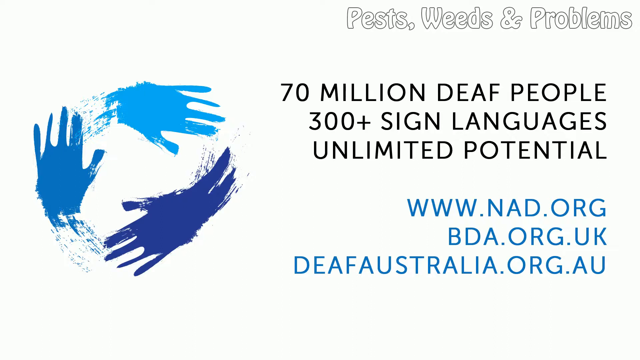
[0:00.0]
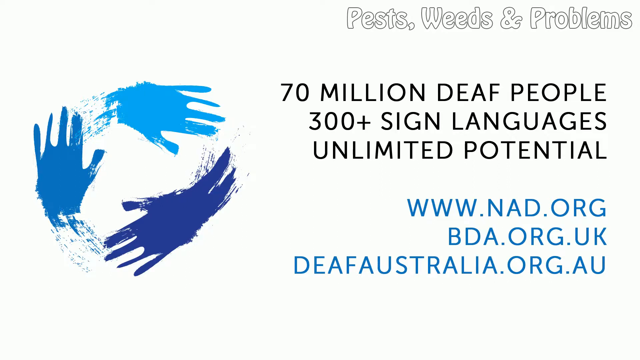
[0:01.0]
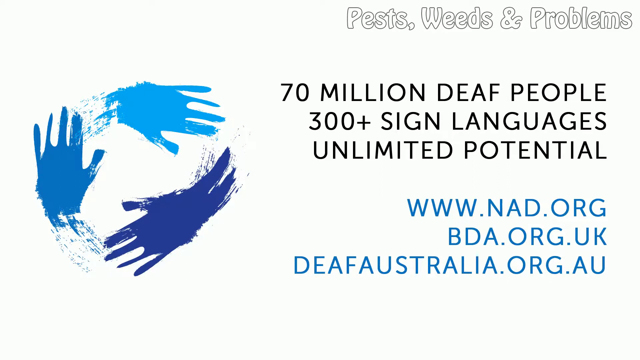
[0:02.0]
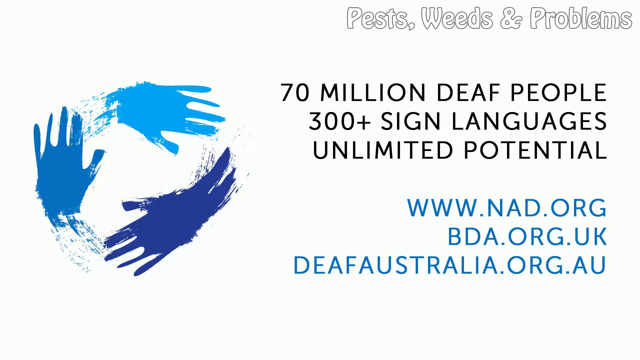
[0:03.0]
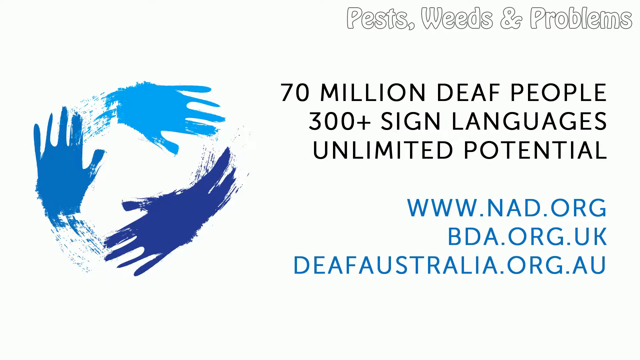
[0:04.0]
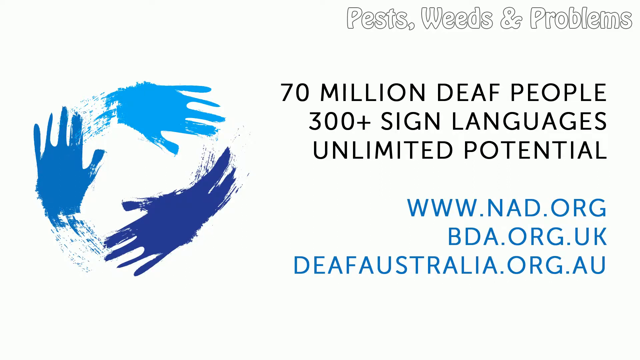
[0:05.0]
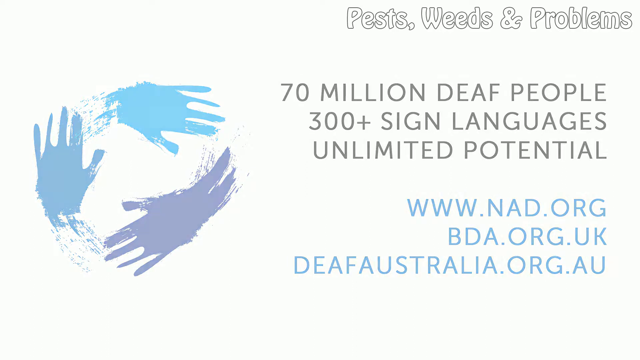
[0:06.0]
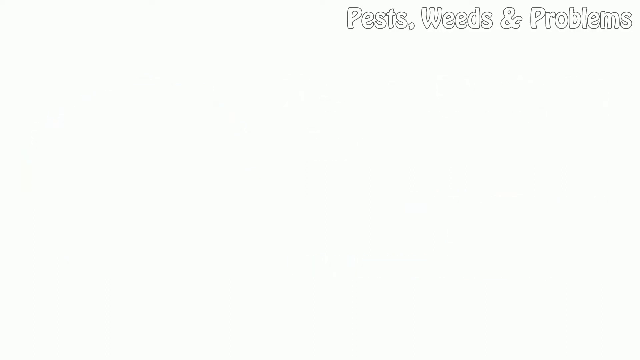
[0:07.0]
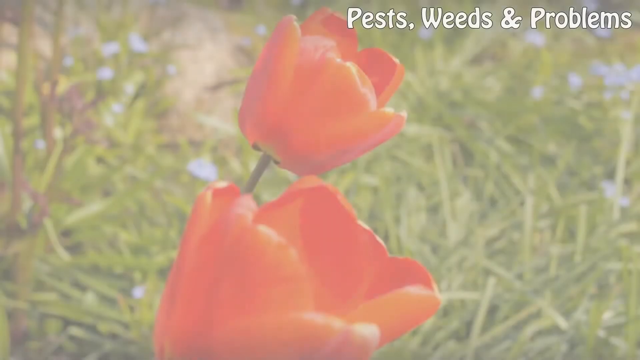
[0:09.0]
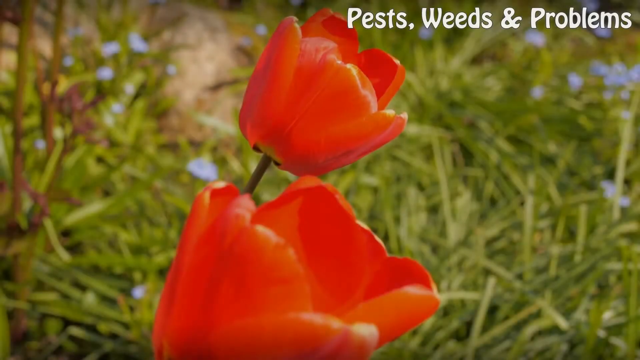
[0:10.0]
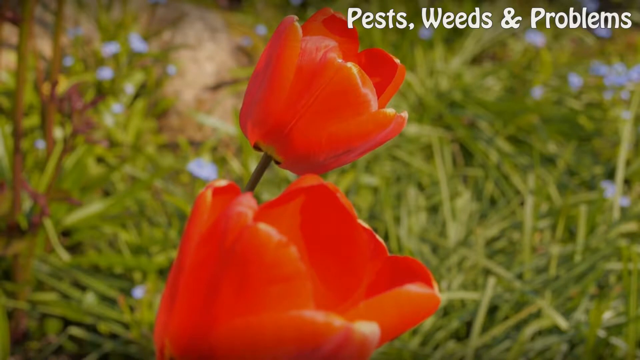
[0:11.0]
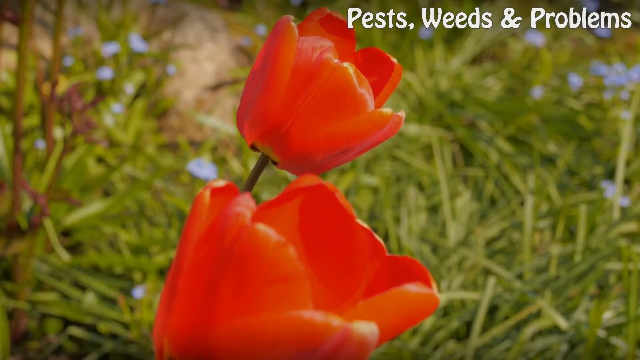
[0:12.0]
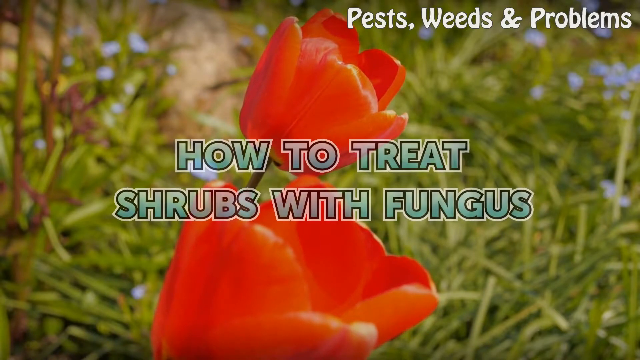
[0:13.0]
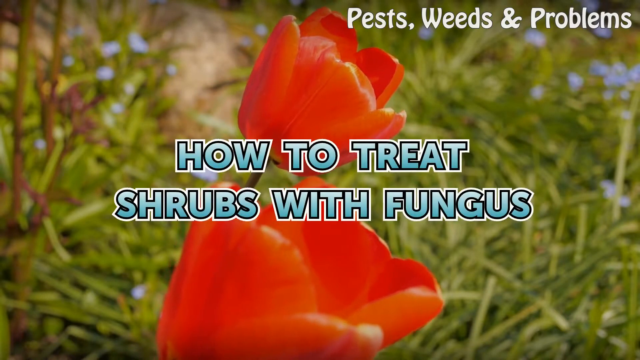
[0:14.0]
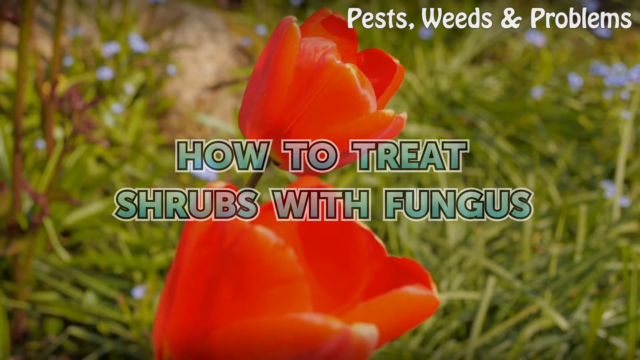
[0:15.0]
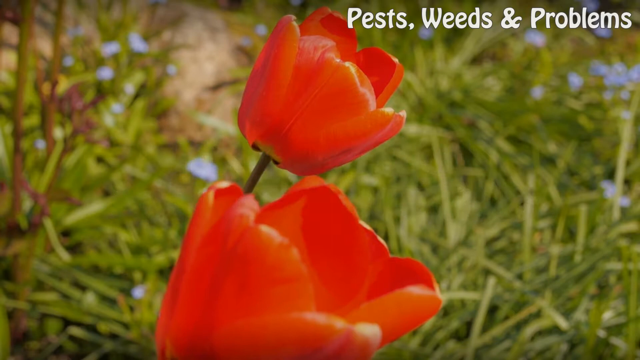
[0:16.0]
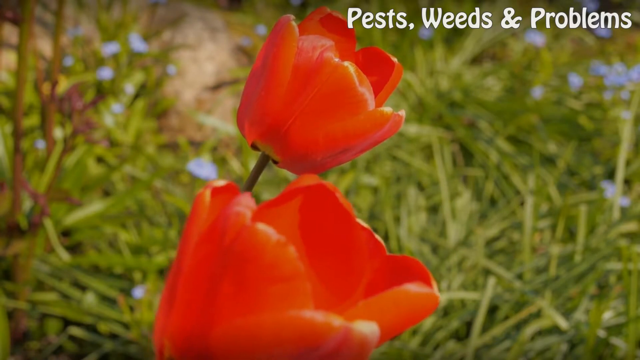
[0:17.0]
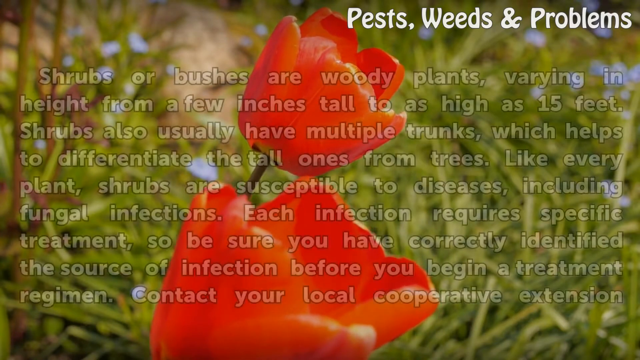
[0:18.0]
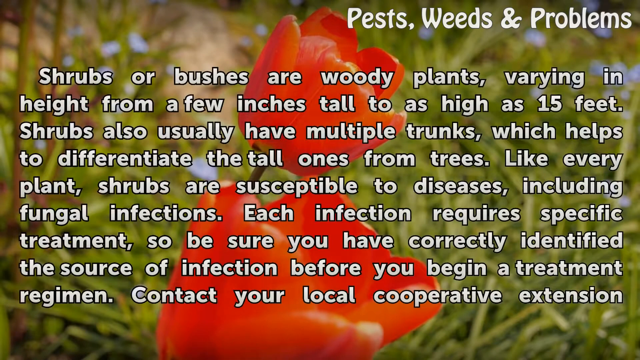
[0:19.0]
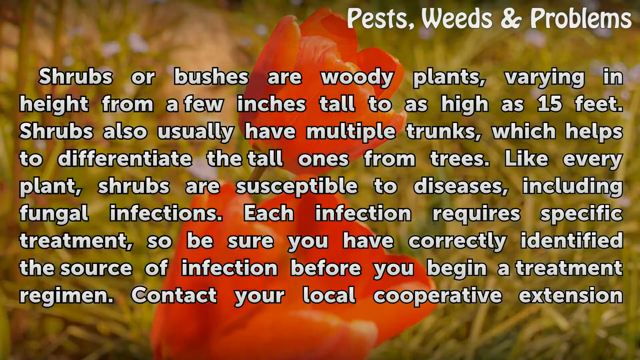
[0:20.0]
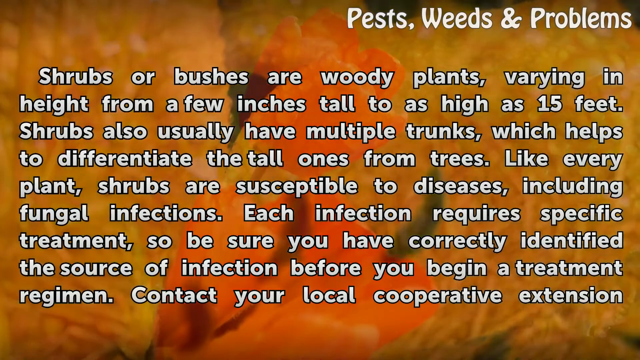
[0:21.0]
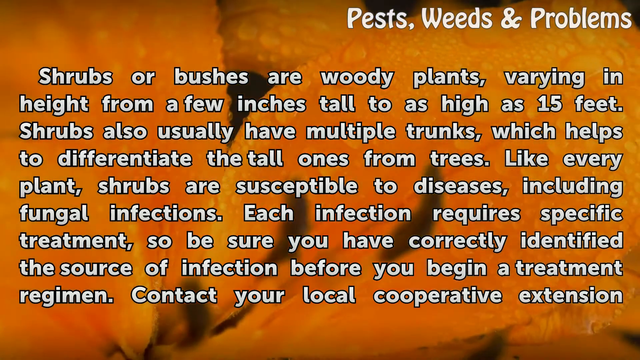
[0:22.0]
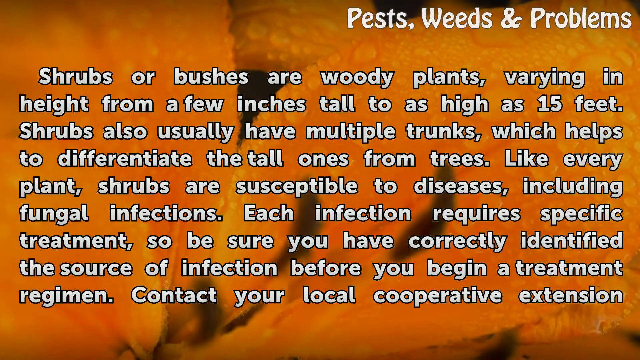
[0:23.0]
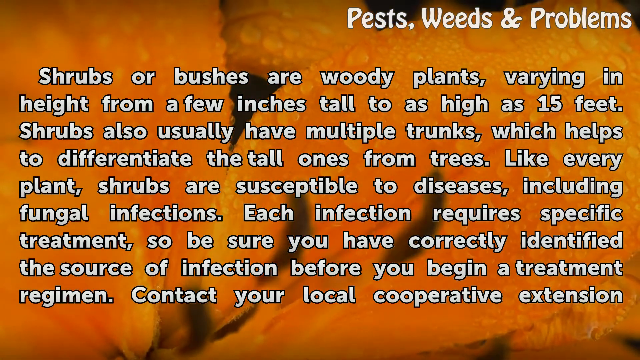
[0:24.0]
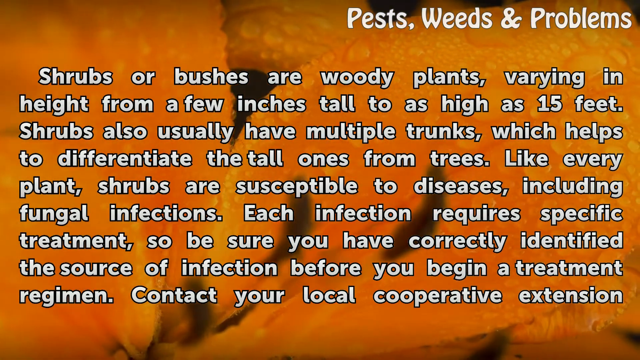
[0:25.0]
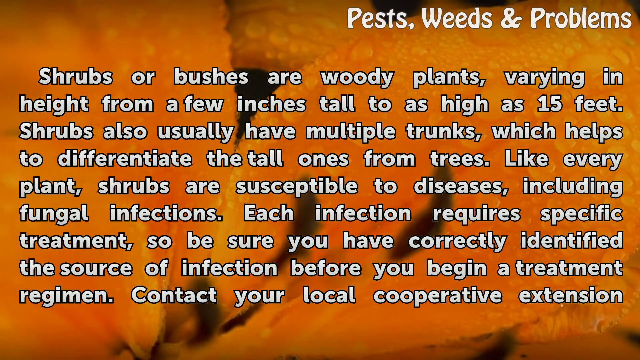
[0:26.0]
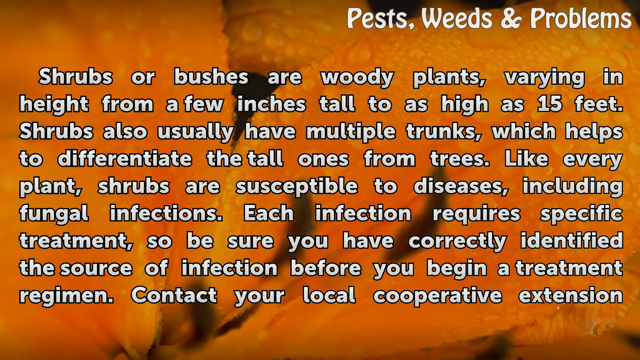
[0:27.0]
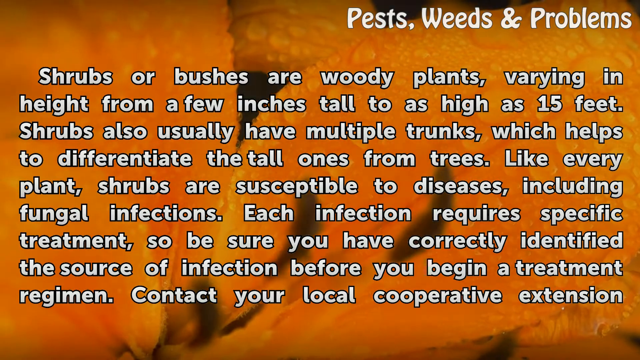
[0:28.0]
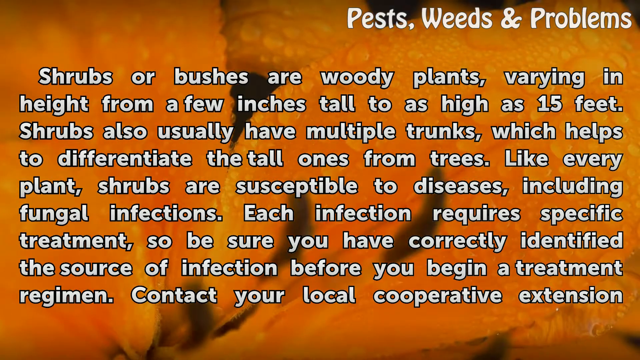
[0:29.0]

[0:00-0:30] A white screen shows three hands in a circle, in varying shades of blue, on the left-hand side. On the right-hand side are six lines of text: "70 million deaf people", "300+ sign languages", "Unlimited potential", "WWW.NAD.ORG", "BDA.ORG.UK" and "DEAFAUSTRALIA.ORG.AU". The first three lines are in black and the rest are light blue. After a few seconds the screen slowly fades to white. The next scene shows two poppies in the center of the screen, gently swaying as though in a breeze, with blurry blades of grass in the background. In the top right corner are the words "Pests, Weeds & Problems" in white. The words "How to treat shrubs with fungus" slowly appear in light green letters in the center of the screen, and after a few seconds they slowly fade out. Nine lines of white text slowly appear and stay on the screen for a few seconds before the background switches from the poppies to a bright orange plant.